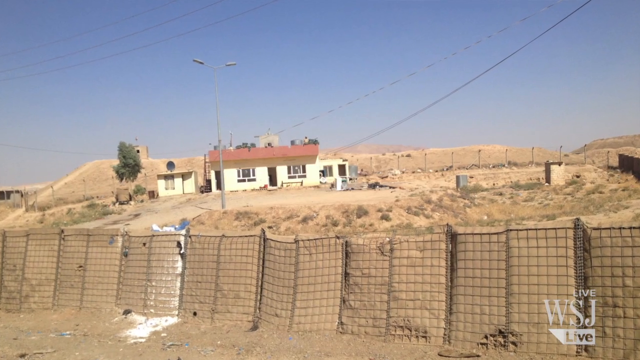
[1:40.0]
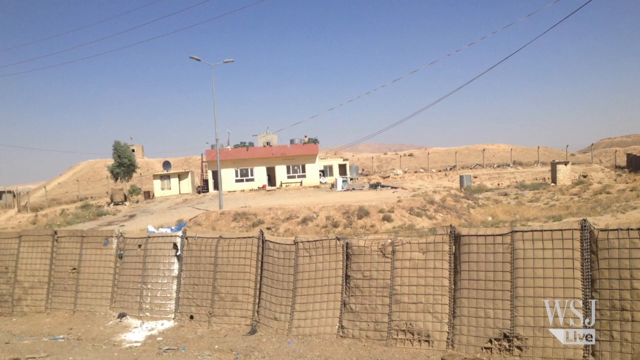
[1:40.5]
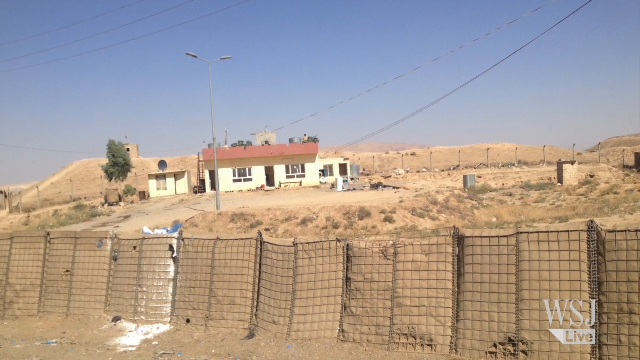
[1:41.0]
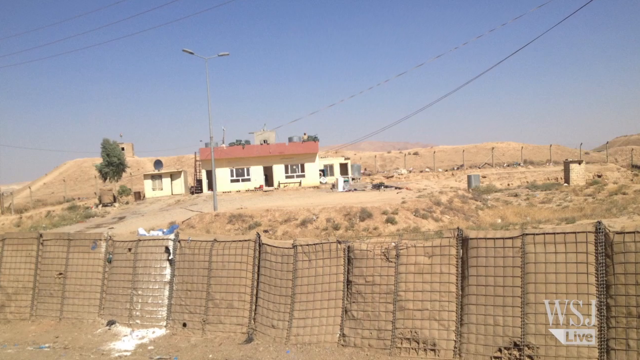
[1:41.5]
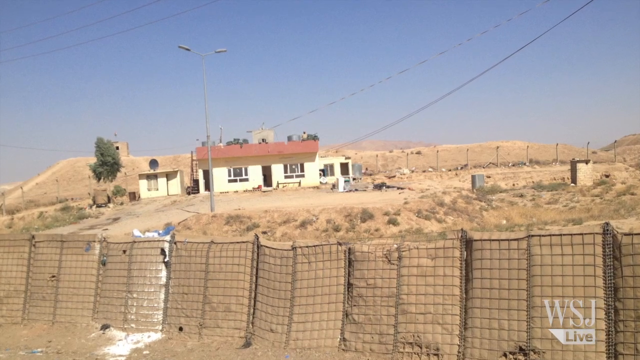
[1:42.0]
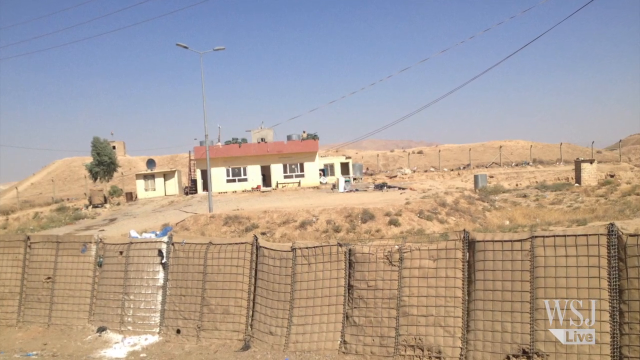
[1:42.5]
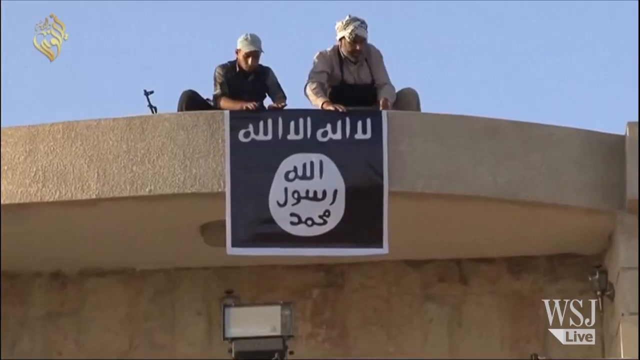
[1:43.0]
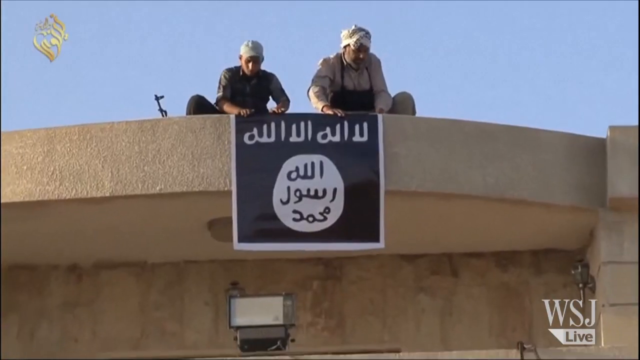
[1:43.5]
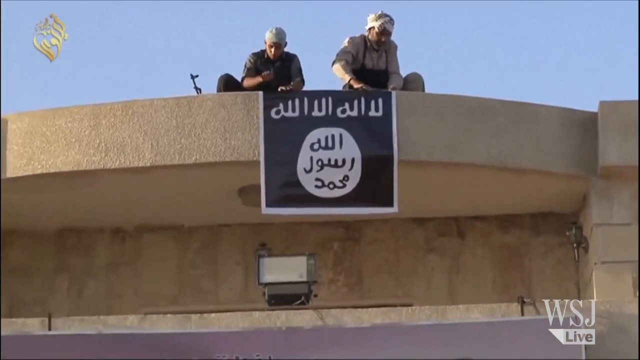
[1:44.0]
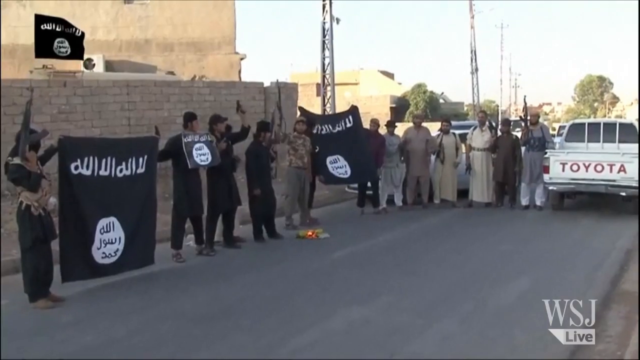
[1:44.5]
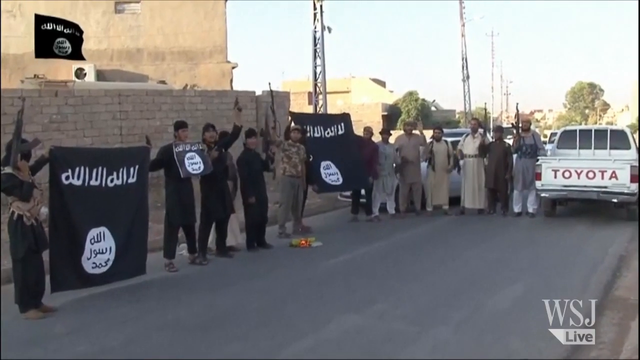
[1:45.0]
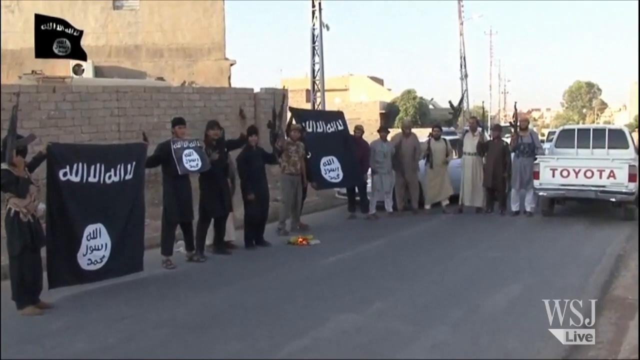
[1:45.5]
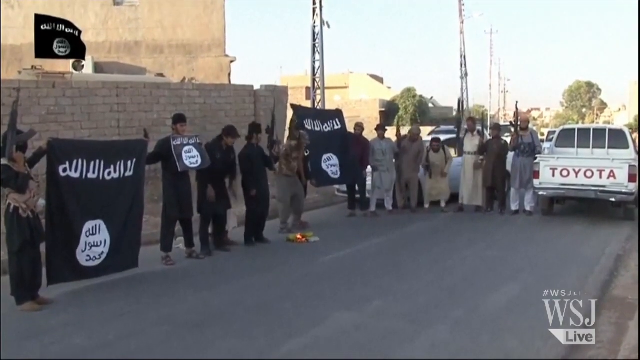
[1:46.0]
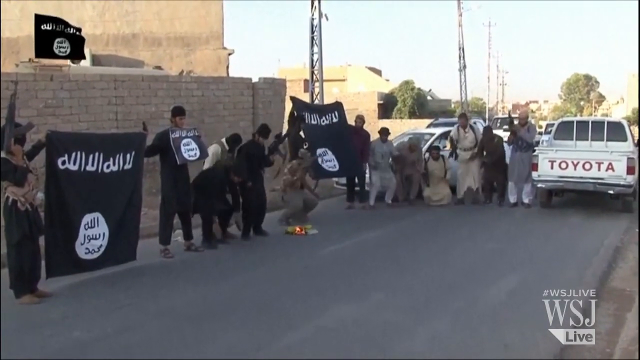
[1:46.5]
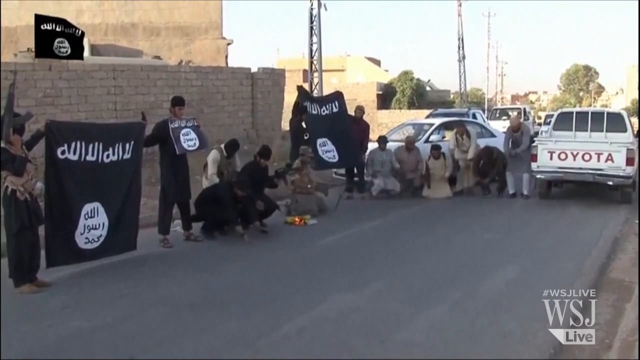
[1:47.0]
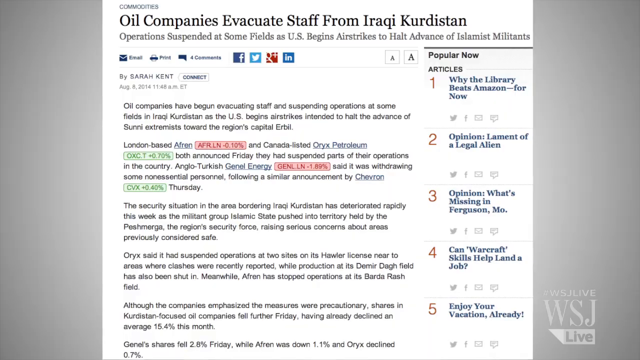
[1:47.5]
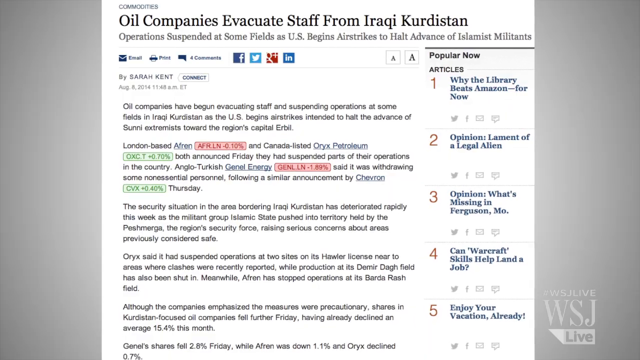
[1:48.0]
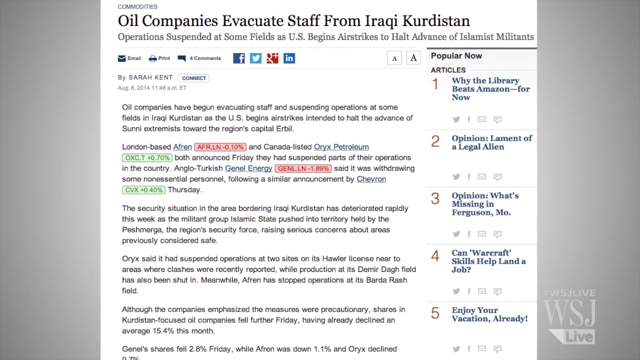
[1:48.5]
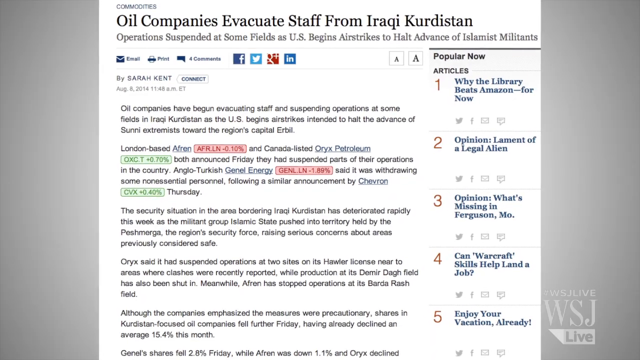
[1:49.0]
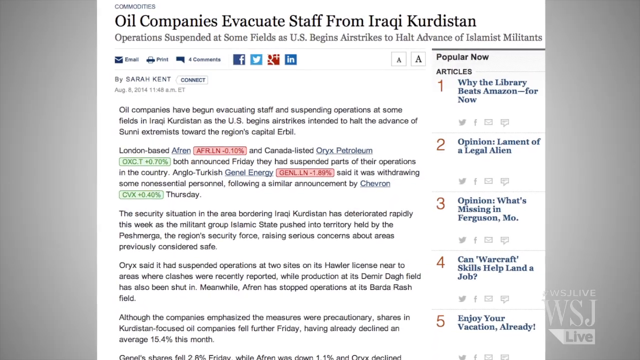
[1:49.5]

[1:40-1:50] An outdoor scene looks onto what seems to be a rising hill in a desert area. Across the bottom third of the frame, a thin black mesh fence spans left to right. Beyond it, the desert rises in elevation into the distance with sparse vegetation throughout. Just left of center is a small white house with a red roof, and to its left is a tall light post with two lights. The camera zooms in toward the house. Next comes a quick shot of two men on a flat, tan building roof, apparently hanging a black and white sign whose text cannot be read; both wear white baseball caps. Another scene then shows what looks like people outside at the edge of a street, protesting.